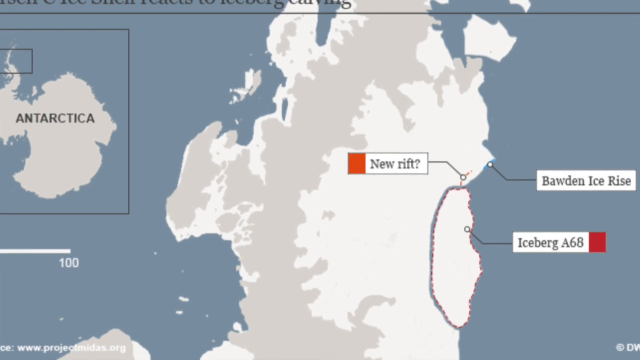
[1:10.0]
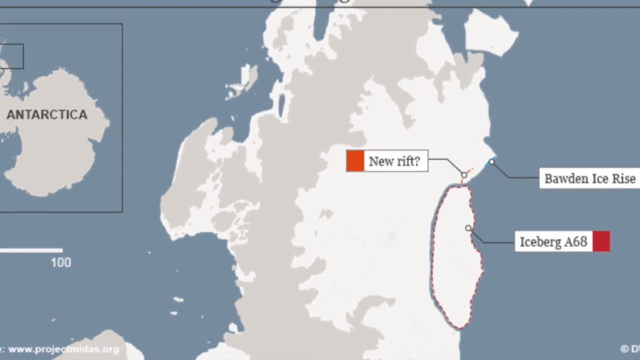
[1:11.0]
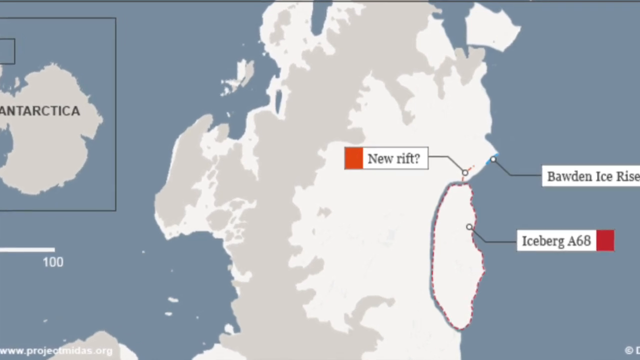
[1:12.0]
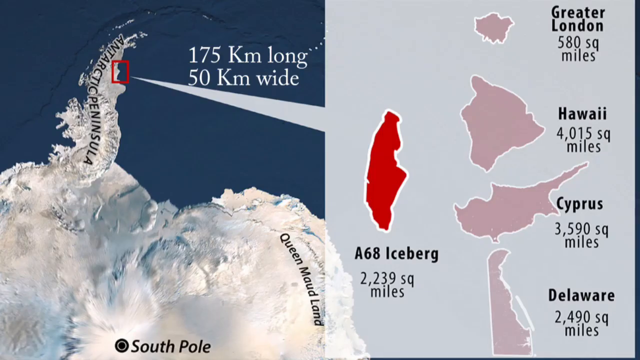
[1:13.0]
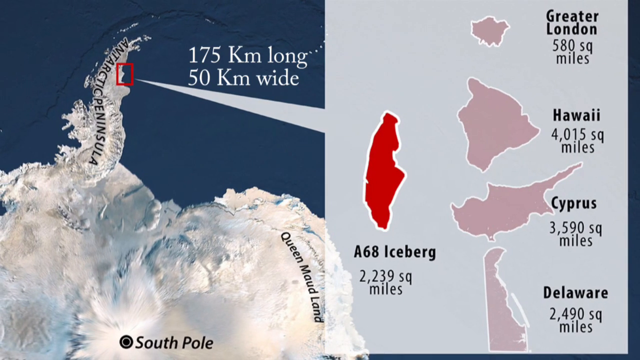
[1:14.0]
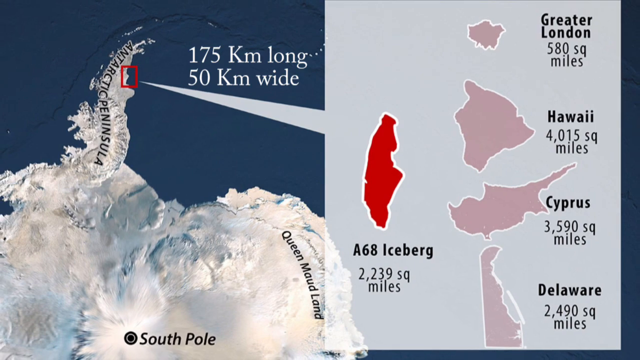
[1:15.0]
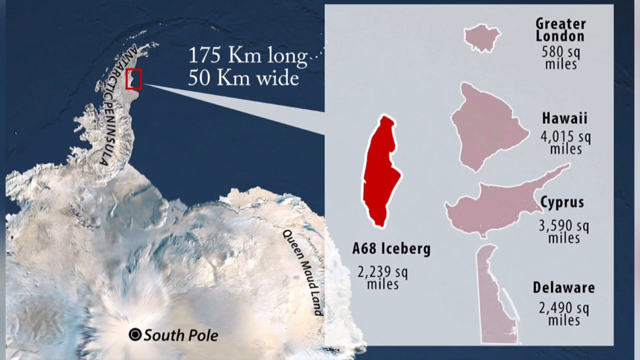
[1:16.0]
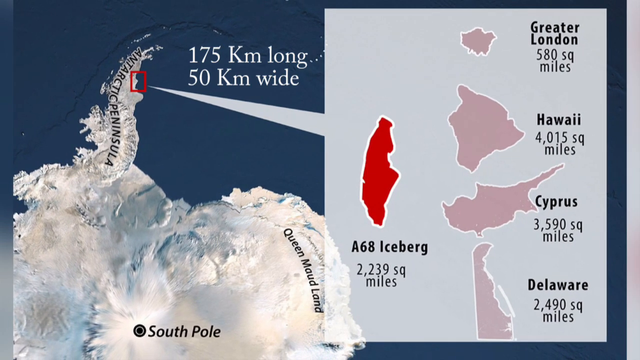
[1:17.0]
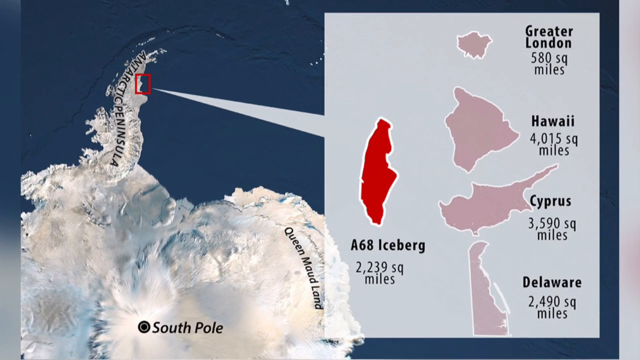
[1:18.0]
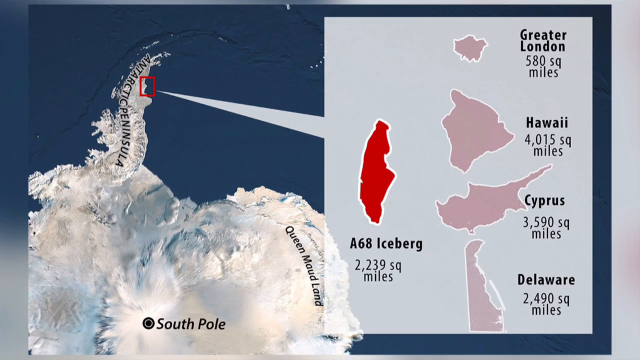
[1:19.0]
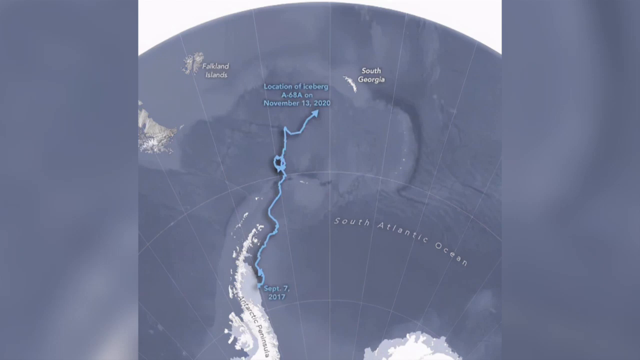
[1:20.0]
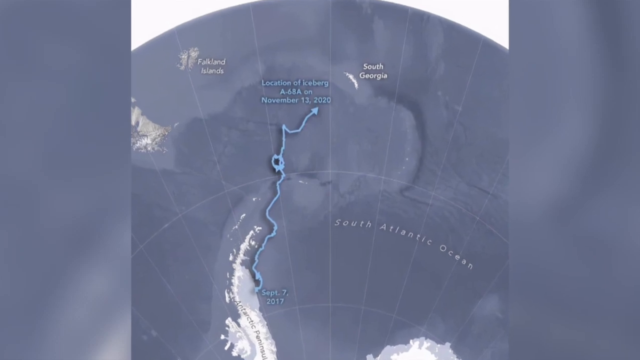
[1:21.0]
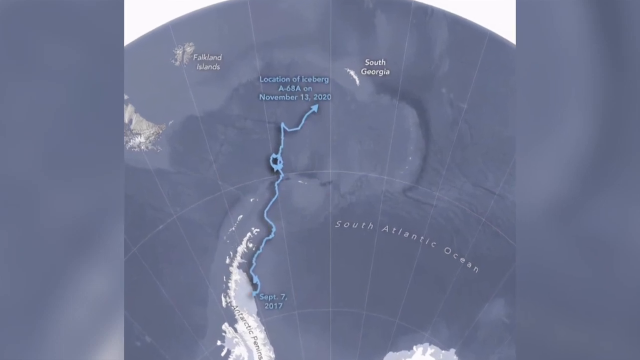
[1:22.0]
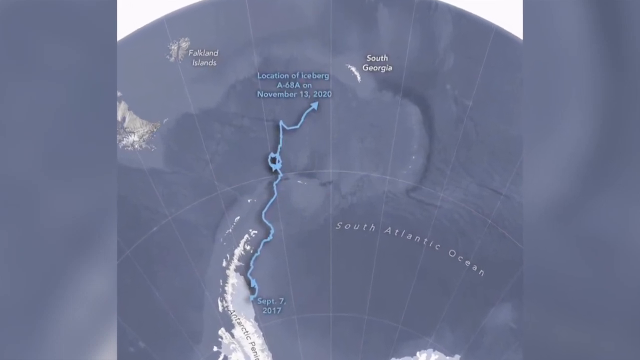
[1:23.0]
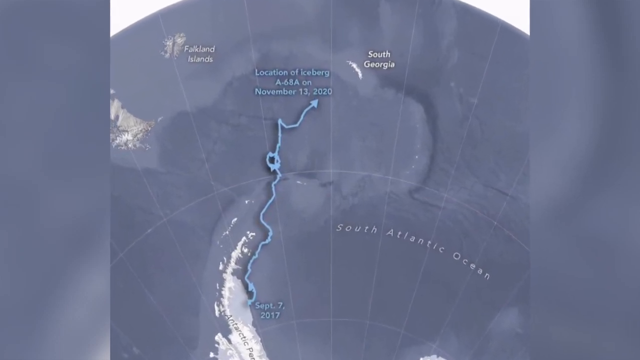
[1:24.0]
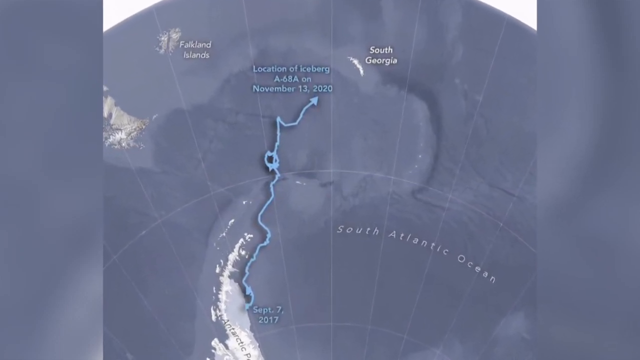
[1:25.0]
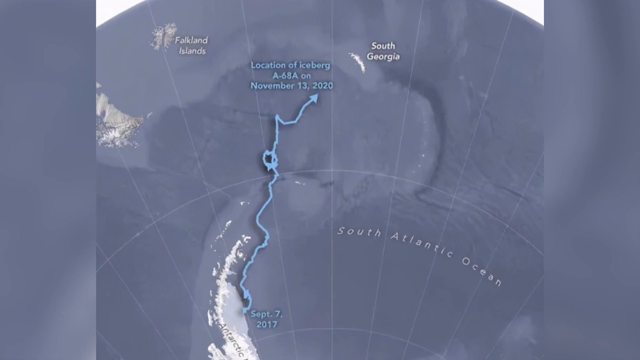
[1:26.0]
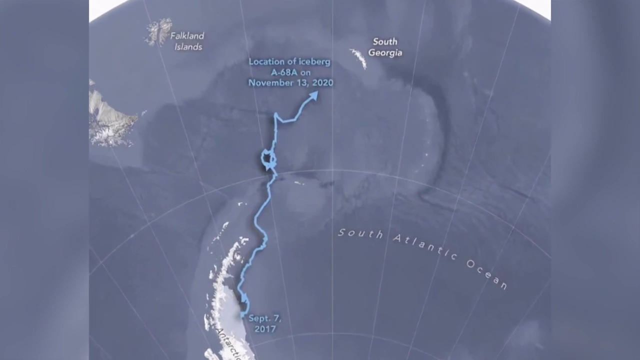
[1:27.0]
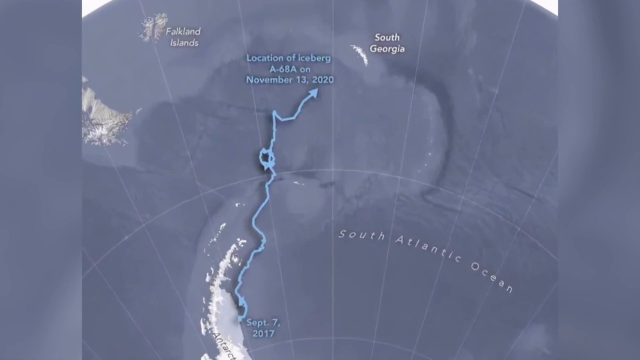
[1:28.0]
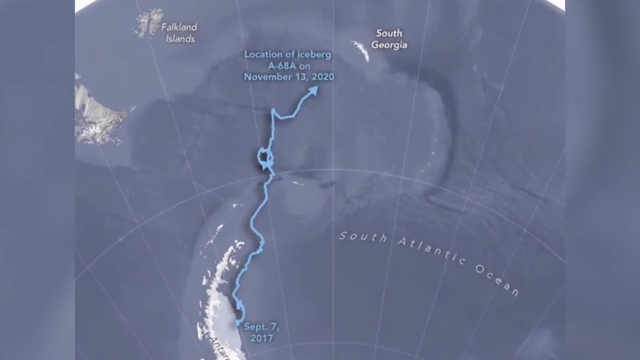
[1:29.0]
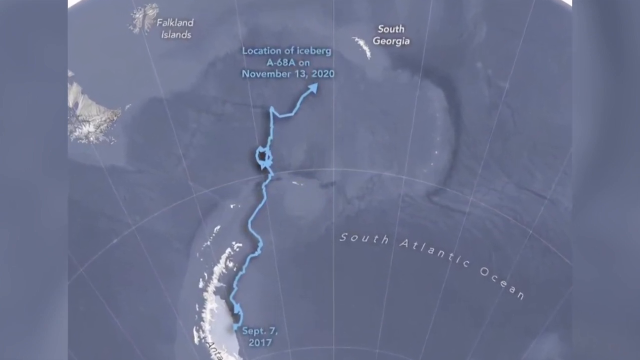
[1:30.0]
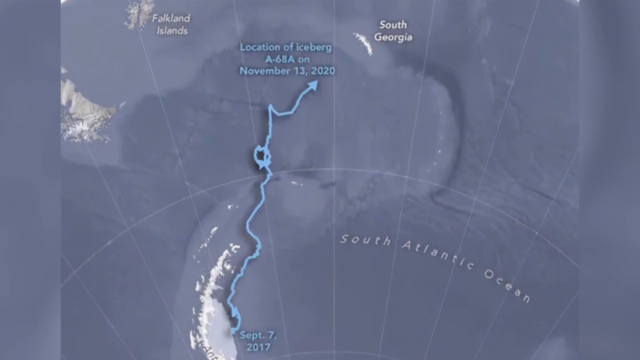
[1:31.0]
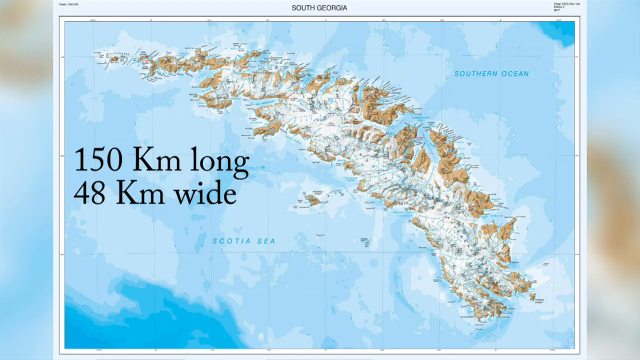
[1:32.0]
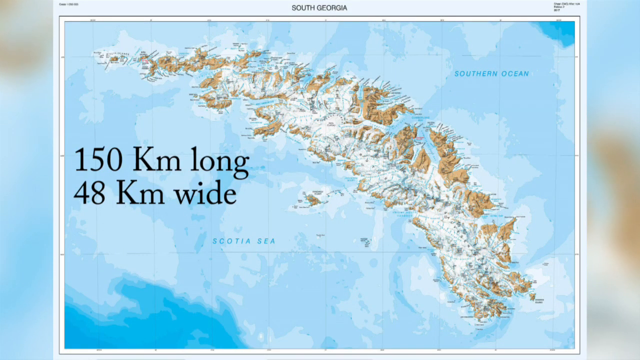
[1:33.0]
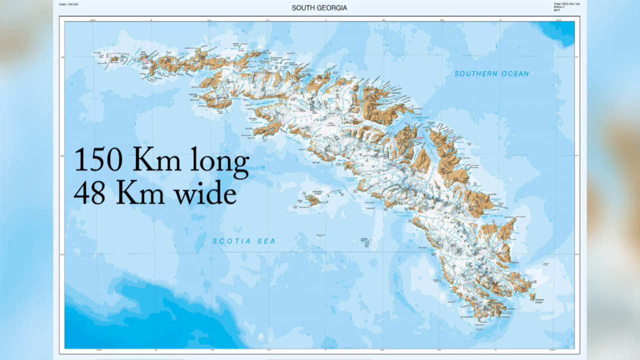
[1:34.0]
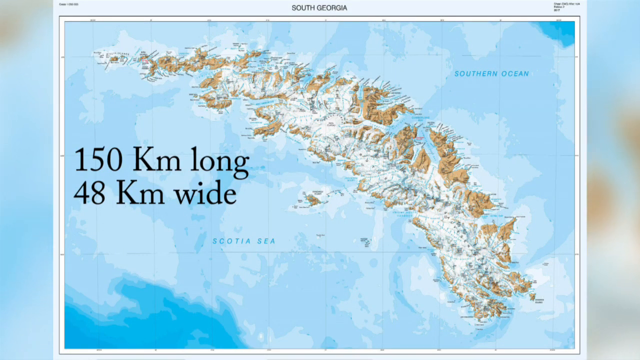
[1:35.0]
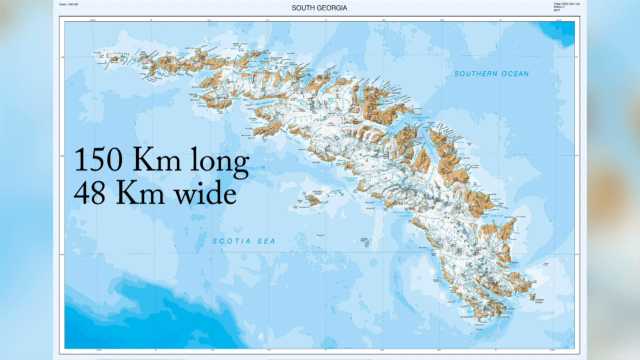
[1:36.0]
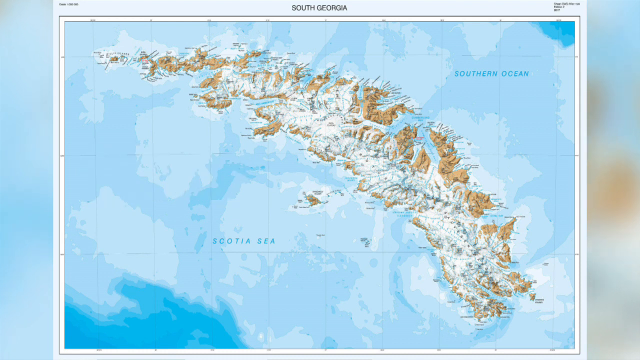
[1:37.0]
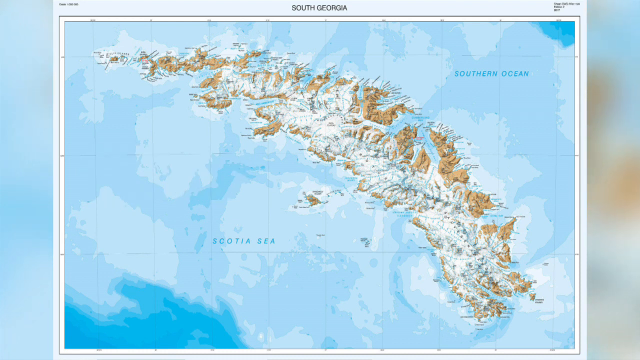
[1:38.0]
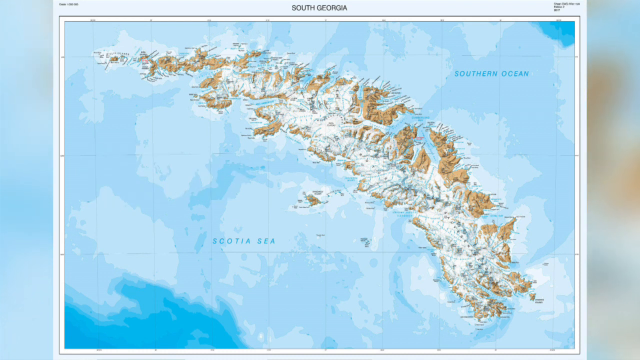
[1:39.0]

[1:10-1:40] The map image changes to a different map with the name "South Pole" in large black text in the centre. To the right are images of smaller countries: the top one is labelled "Greater London", the second "Hawaii", the third "Cyprus" and the bottom one "Delaware". An image shows where an iceberg was discovered, dated "November 13th 2020". Another map follows with the title "South Georgia" above it; "Southern Ocean" appears in the top right of the image and "Scotia sea" in the bottom left.